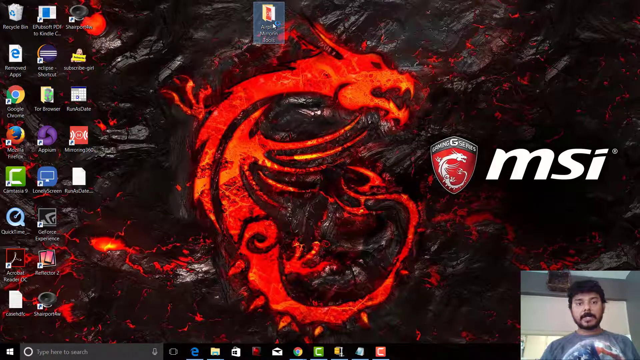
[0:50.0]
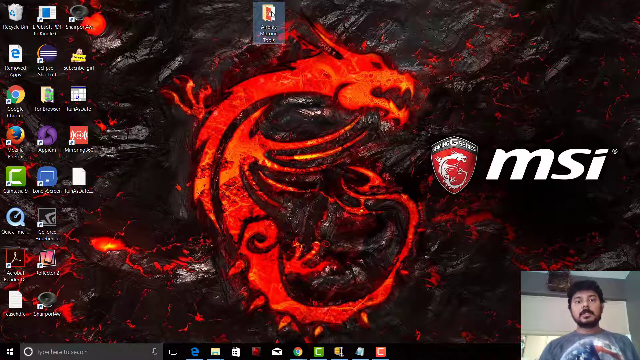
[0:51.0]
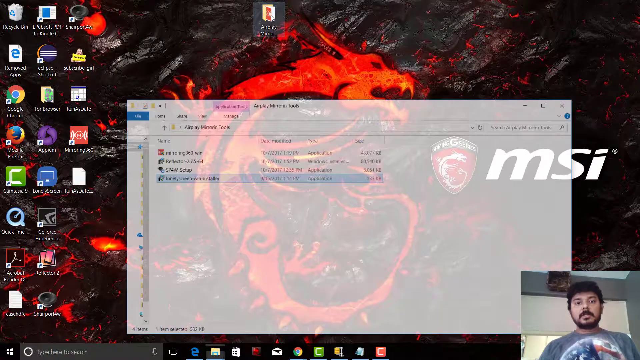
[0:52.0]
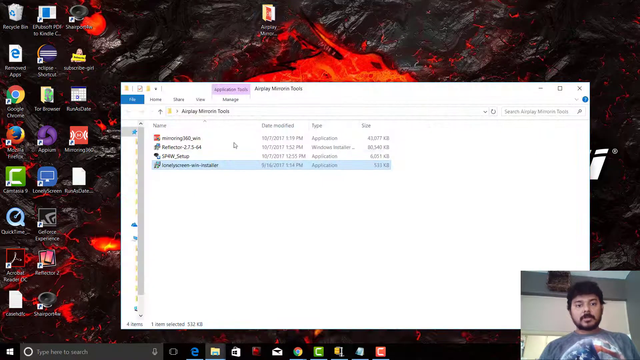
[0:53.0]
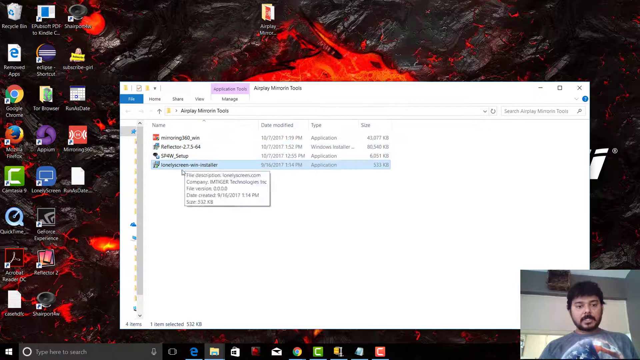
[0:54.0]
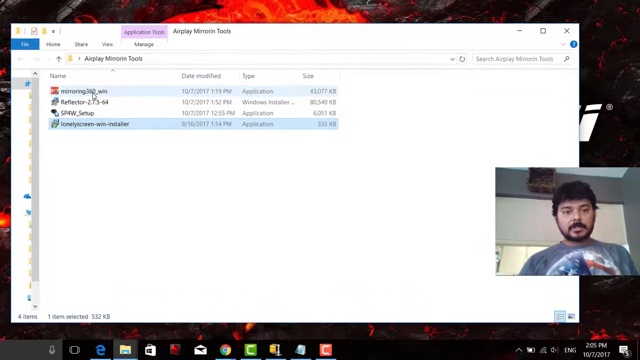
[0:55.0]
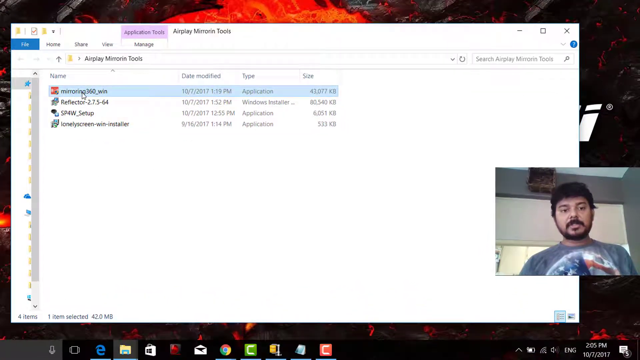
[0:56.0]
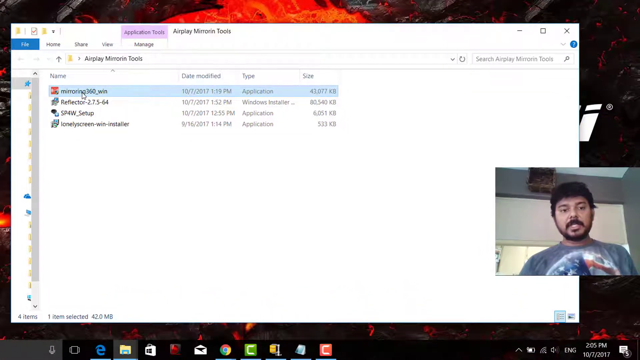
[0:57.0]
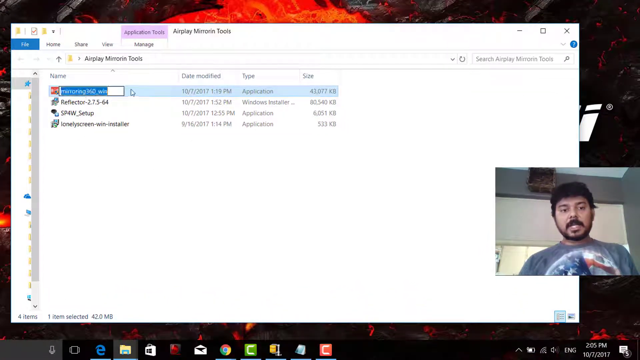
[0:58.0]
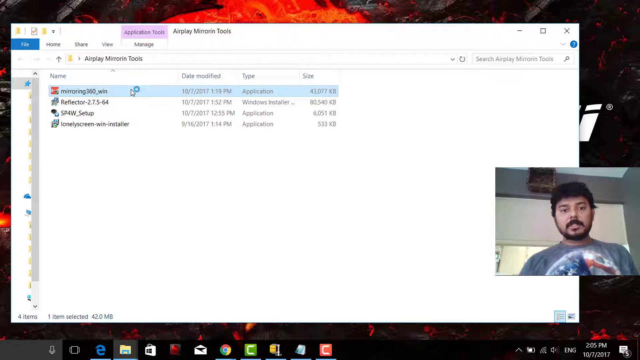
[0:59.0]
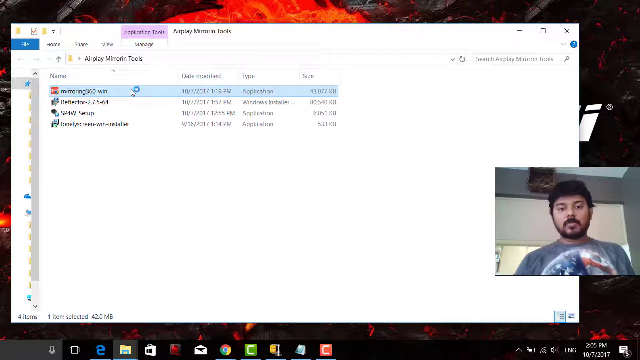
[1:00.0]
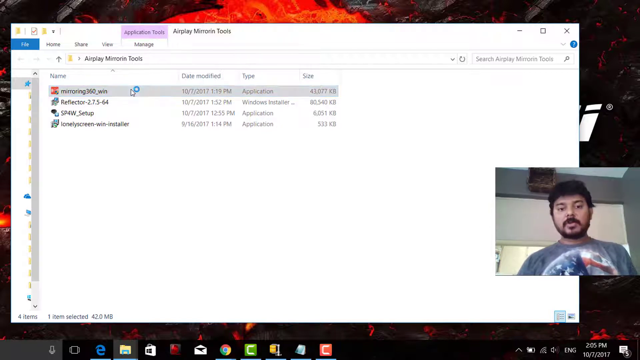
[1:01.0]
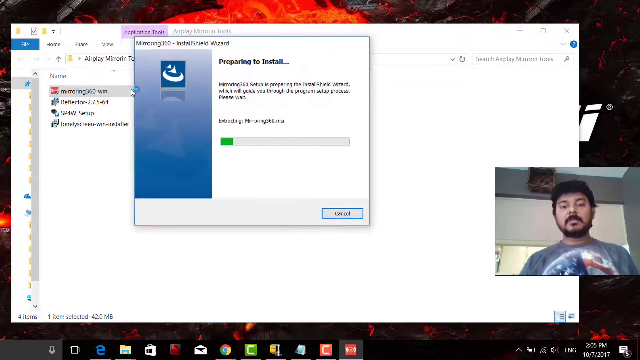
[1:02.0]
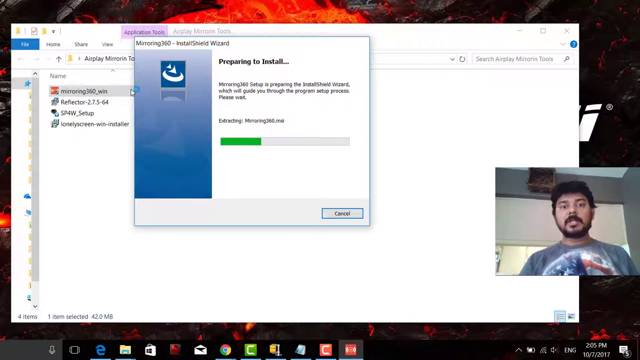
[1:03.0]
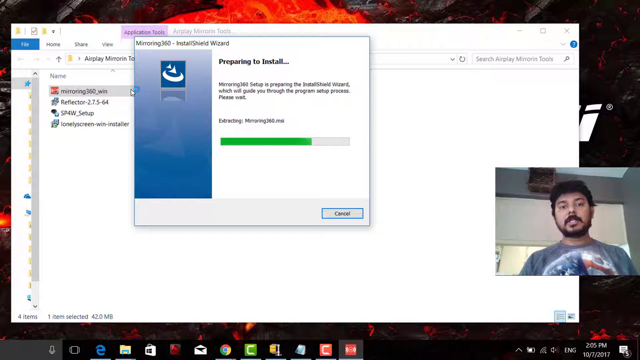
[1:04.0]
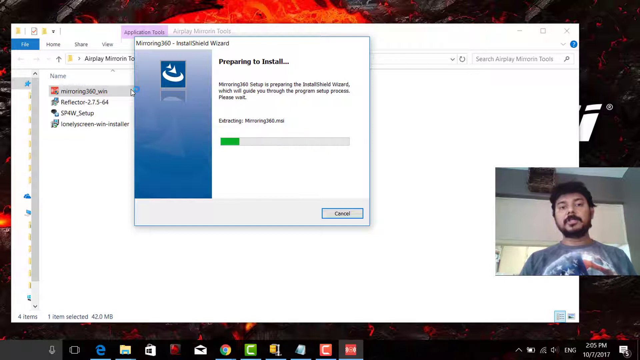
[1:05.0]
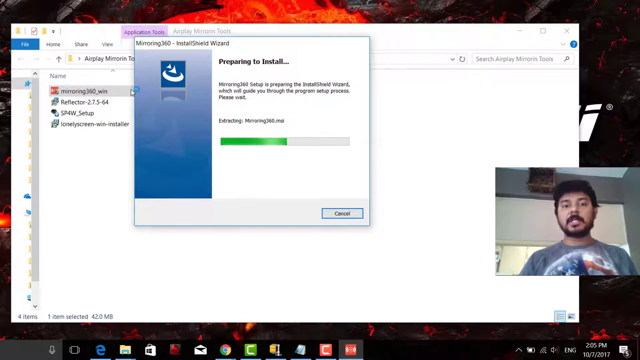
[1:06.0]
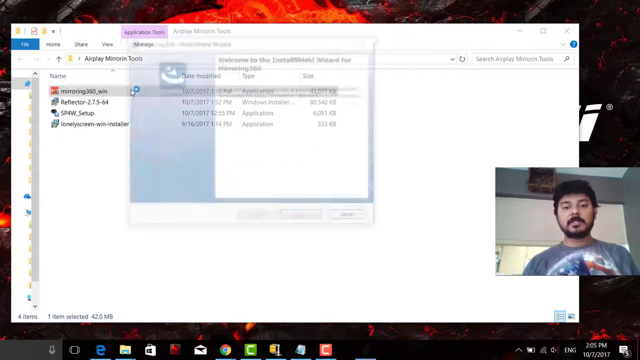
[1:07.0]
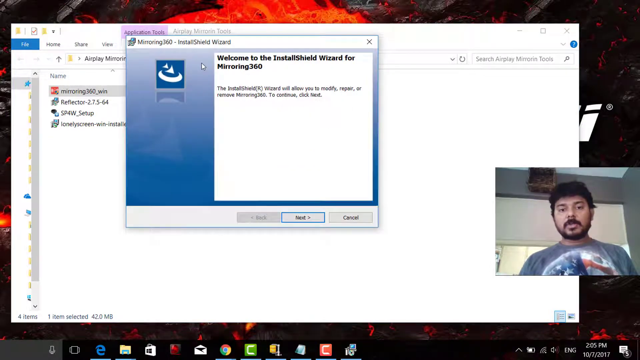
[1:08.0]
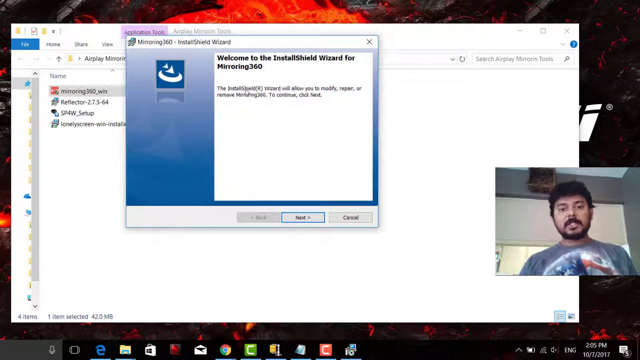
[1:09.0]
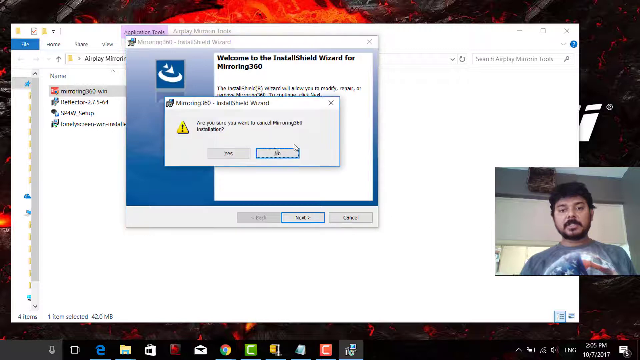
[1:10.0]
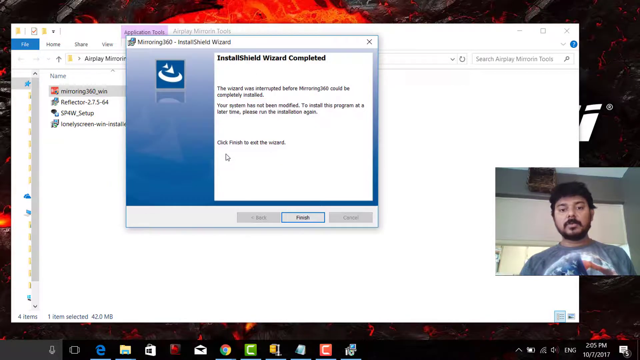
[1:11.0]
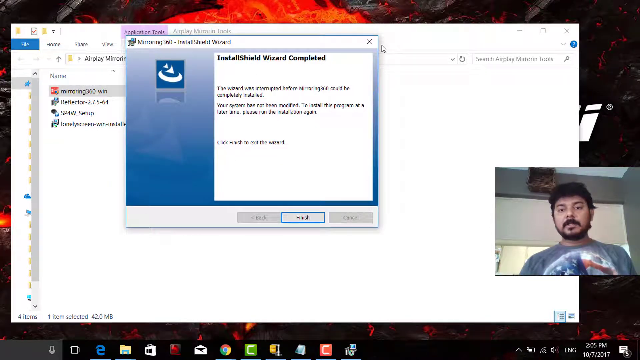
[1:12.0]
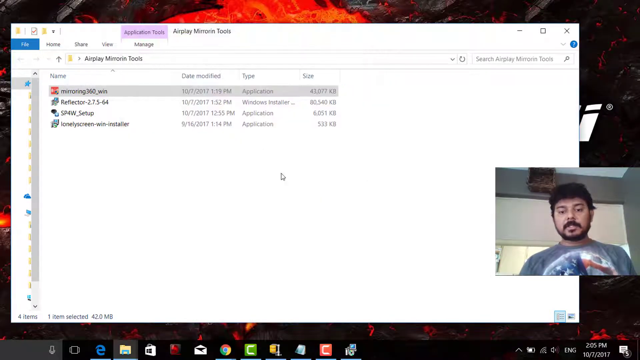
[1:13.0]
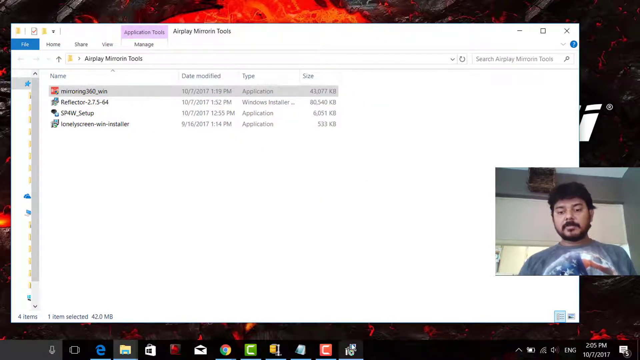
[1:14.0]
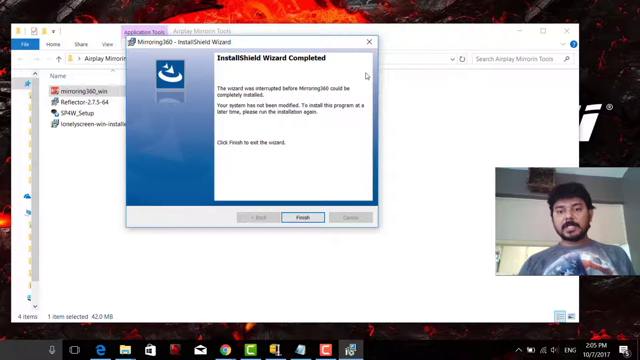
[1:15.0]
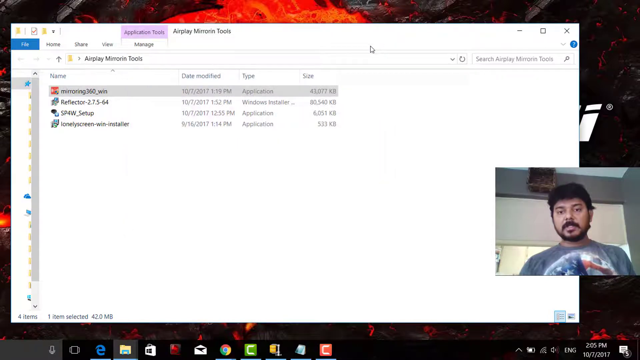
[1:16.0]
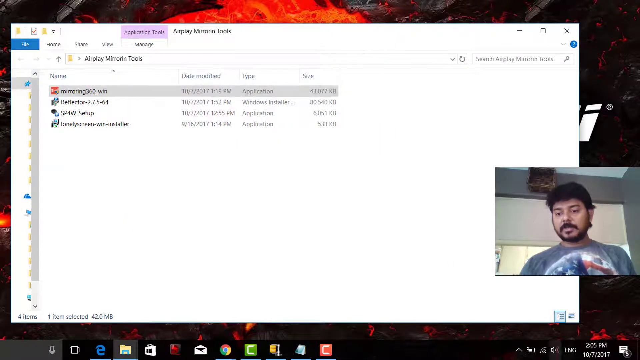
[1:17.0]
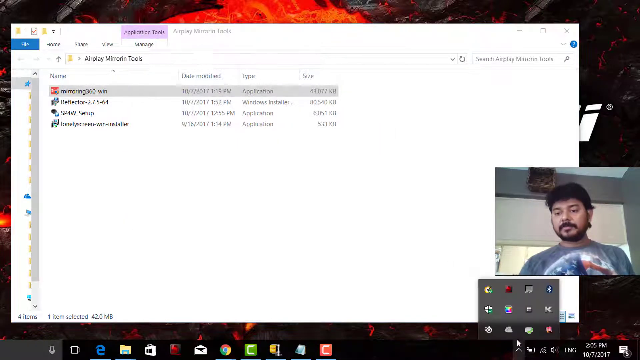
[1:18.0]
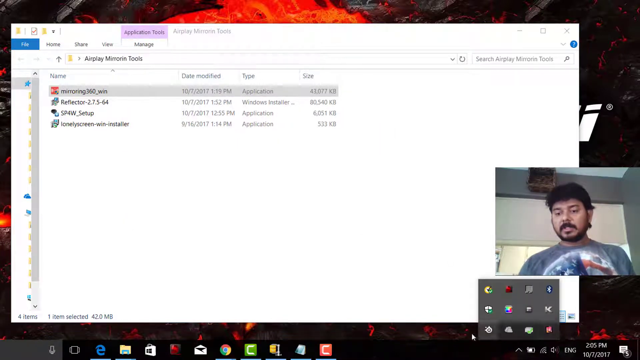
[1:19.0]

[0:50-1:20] A computer screen shows apps and icons along the left side, with a big red dragon as kind of the background decoration in the middle and the letters MSI in white. In the lower right corner a man is talking, kind of blogging. He has opened a section on his screen that says "mirroring 360_win" and is preparing to install. A green box kind of moves as if it is filling up, and he clicks on it as the green moves further to the right. He then moves very fast as he shows the device and everything he wants to work. The page he has opened is all about the mirroring product shown earlier in the video.